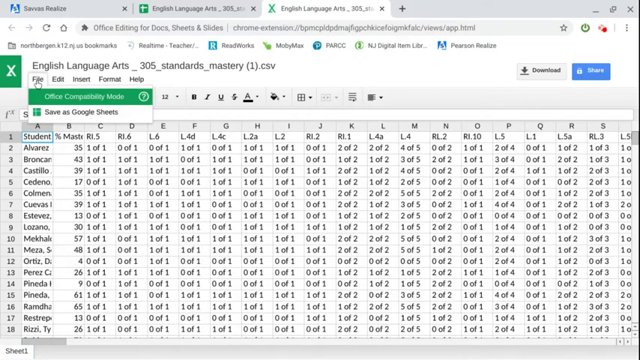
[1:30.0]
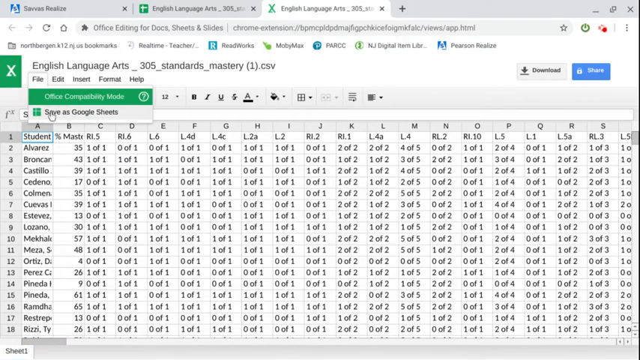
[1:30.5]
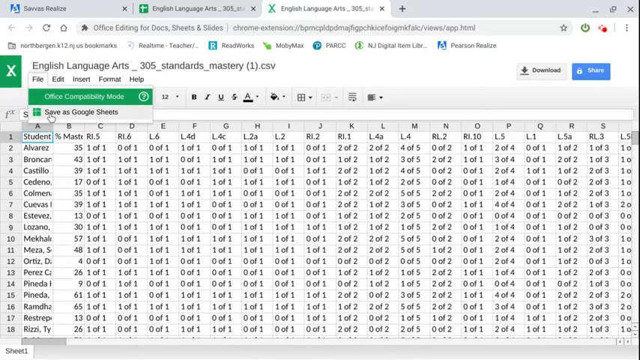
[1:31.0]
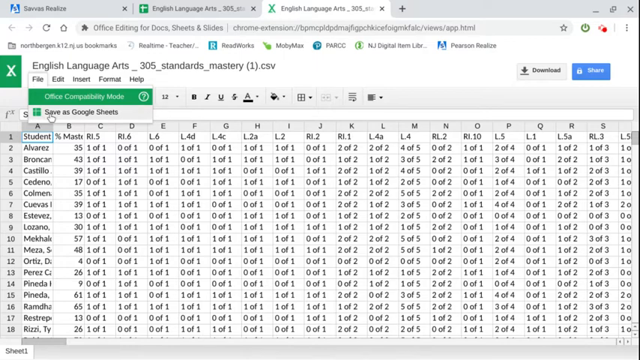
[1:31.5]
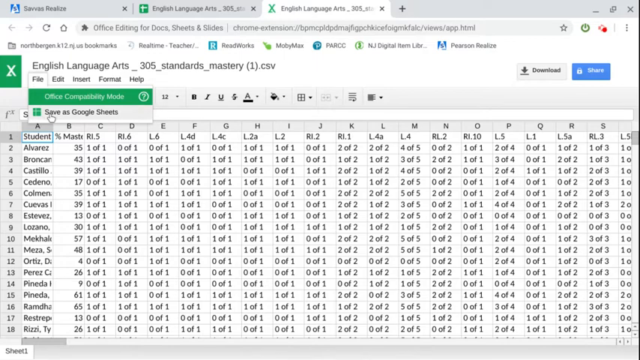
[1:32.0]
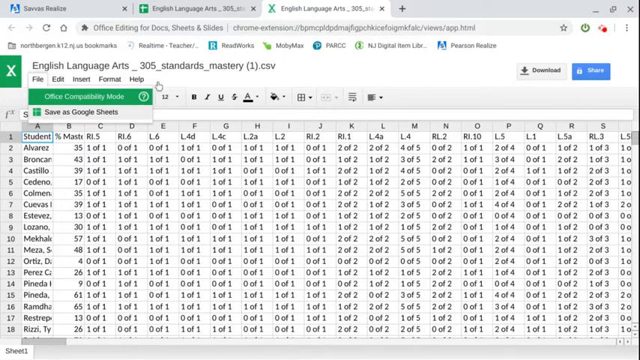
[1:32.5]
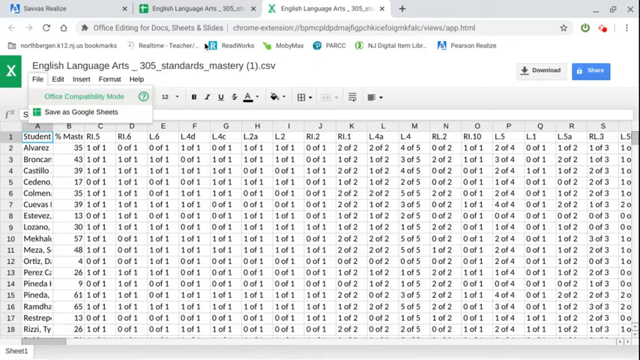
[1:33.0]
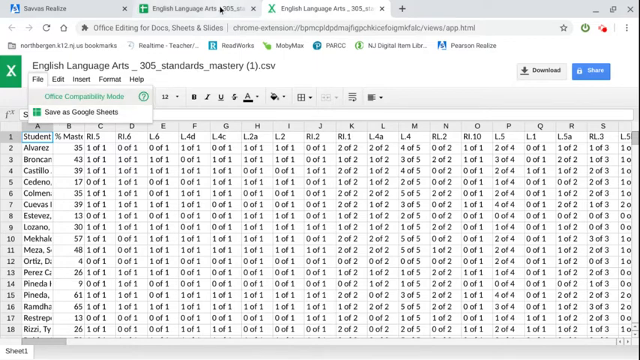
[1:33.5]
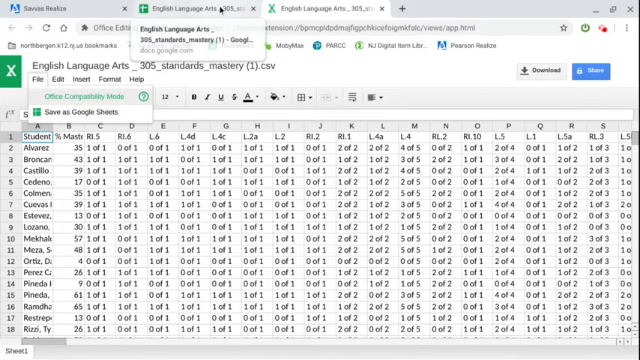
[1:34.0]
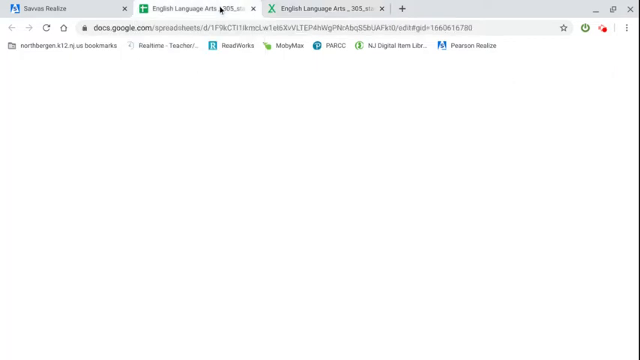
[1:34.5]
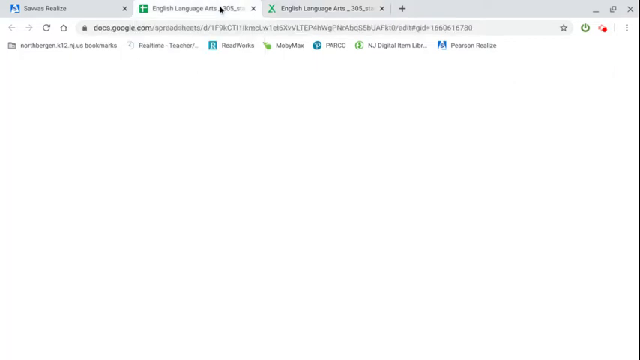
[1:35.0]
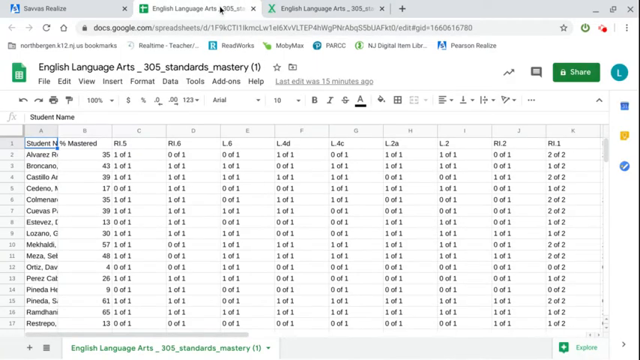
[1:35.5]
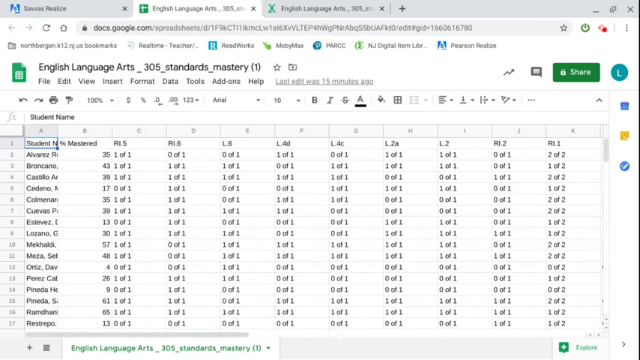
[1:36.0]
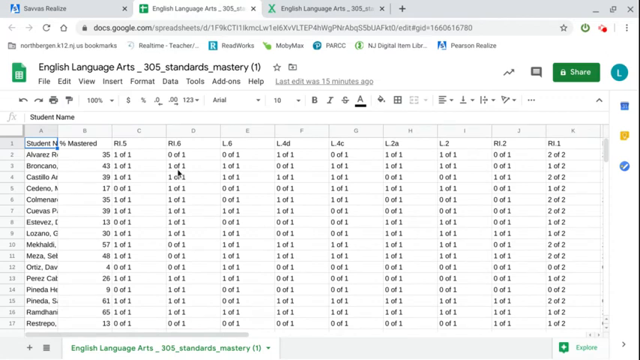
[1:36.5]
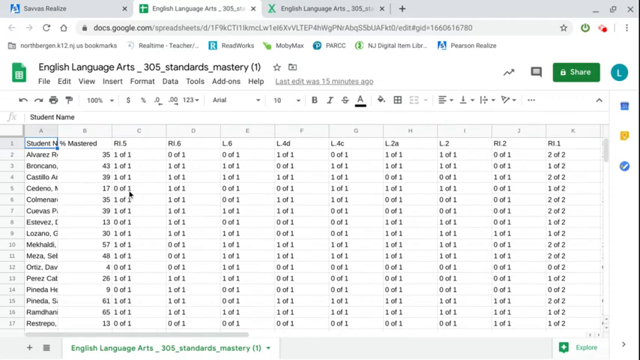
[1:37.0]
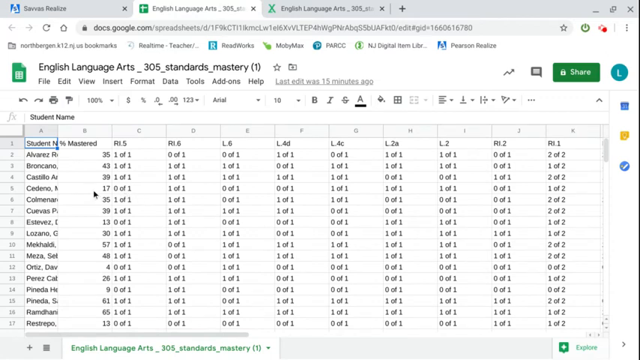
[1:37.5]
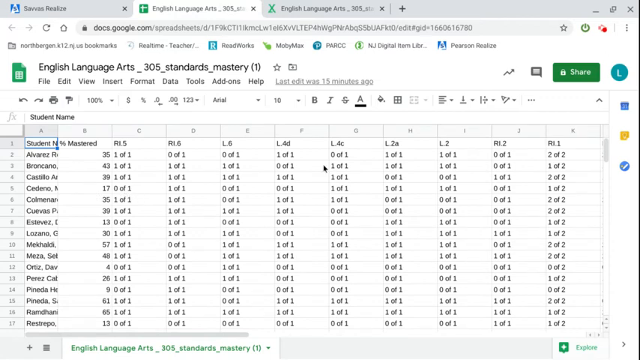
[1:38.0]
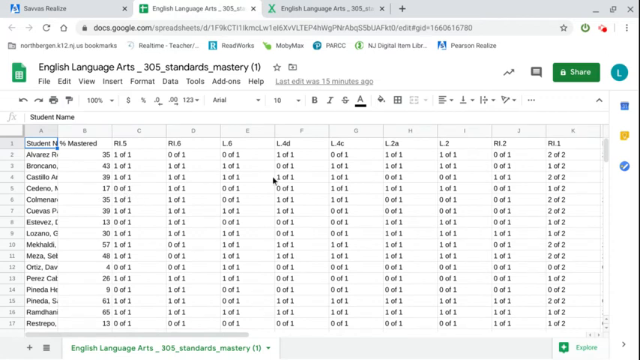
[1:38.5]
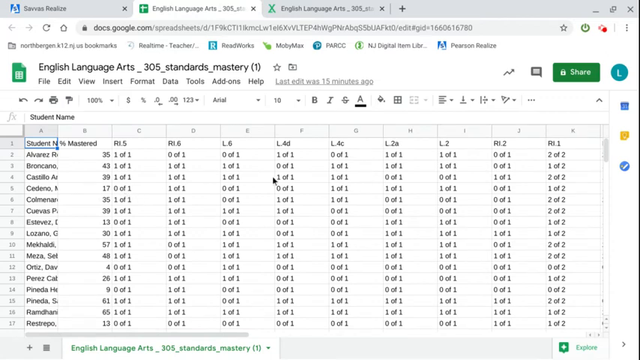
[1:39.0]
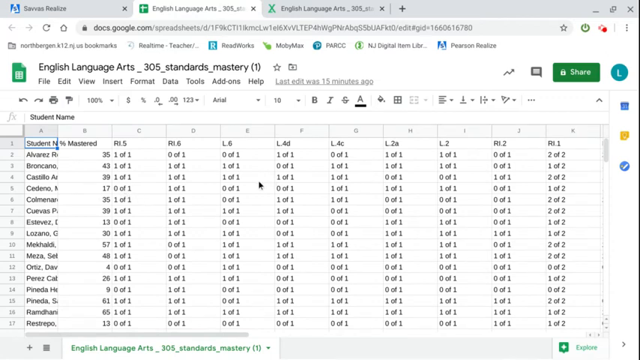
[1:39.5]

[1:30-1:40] The file is open in a spreadsheet, apparently a Google Sheet, showing Standards Mastery. The mouse moves over the data and appears to select some things. The view then switches to another open tab, possibly a second version of the file. No changes are made to the data.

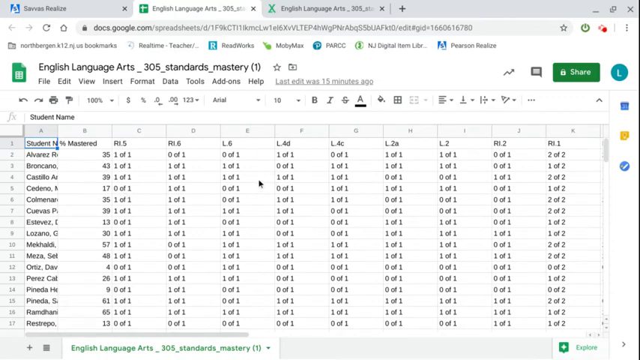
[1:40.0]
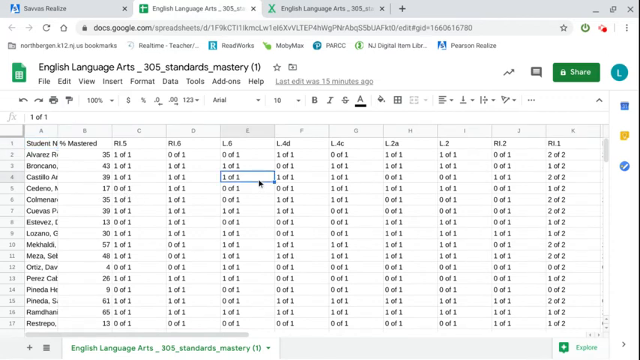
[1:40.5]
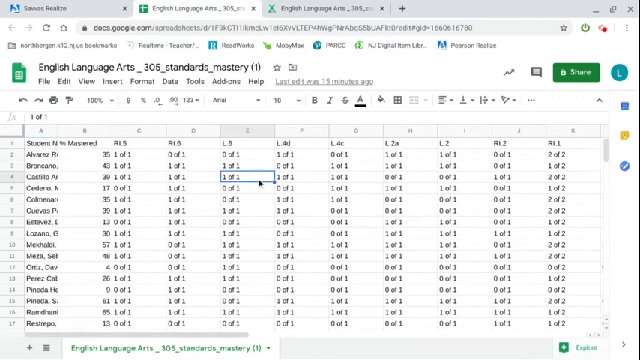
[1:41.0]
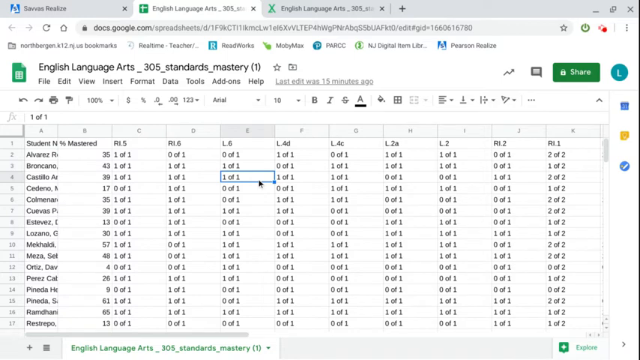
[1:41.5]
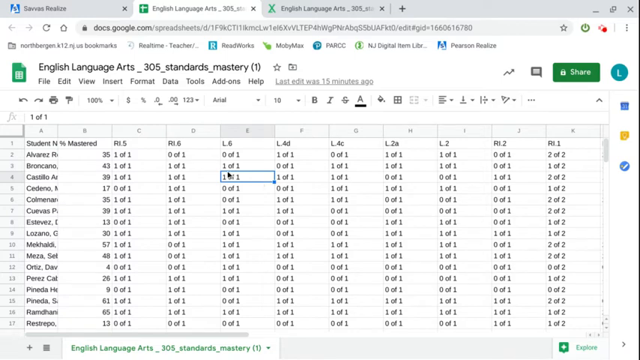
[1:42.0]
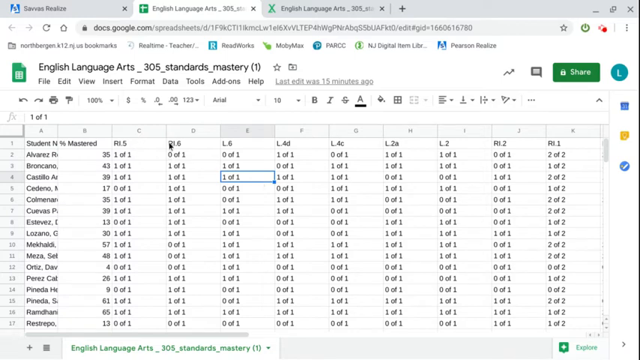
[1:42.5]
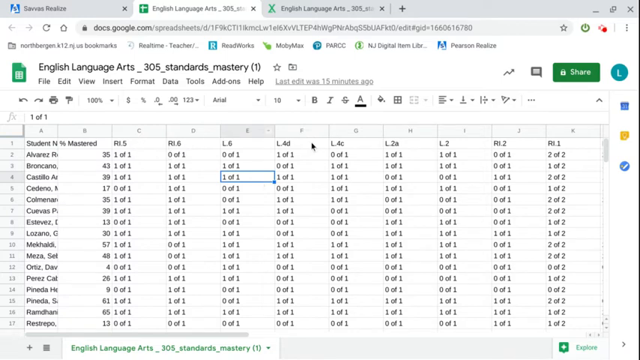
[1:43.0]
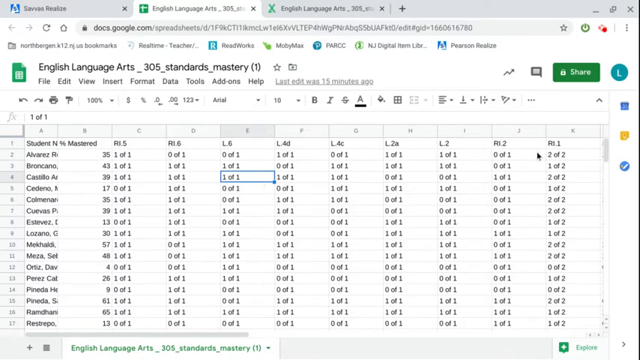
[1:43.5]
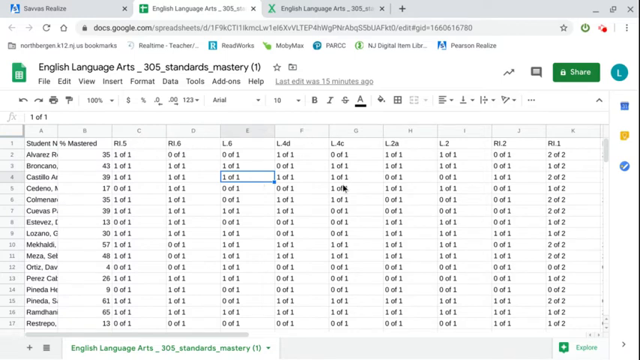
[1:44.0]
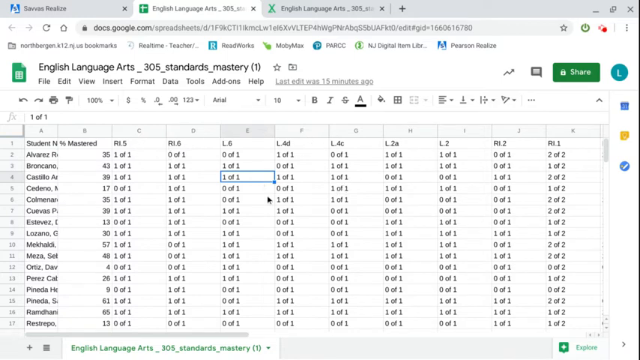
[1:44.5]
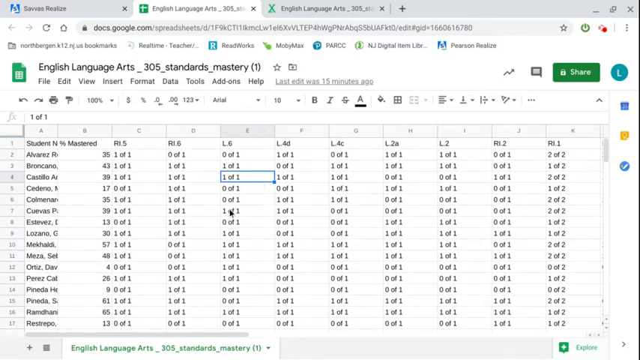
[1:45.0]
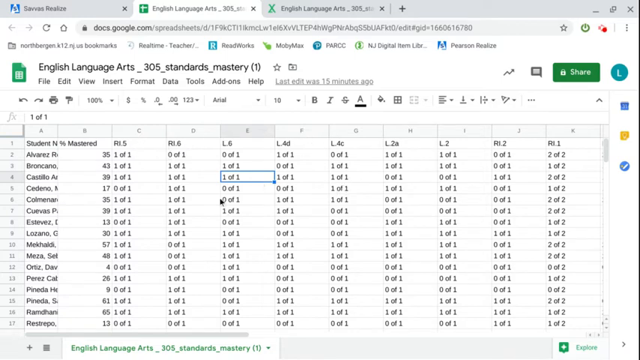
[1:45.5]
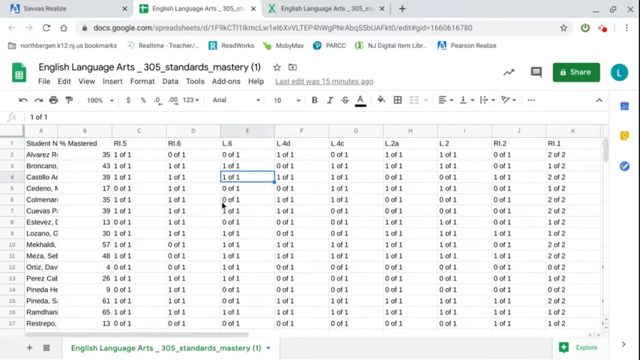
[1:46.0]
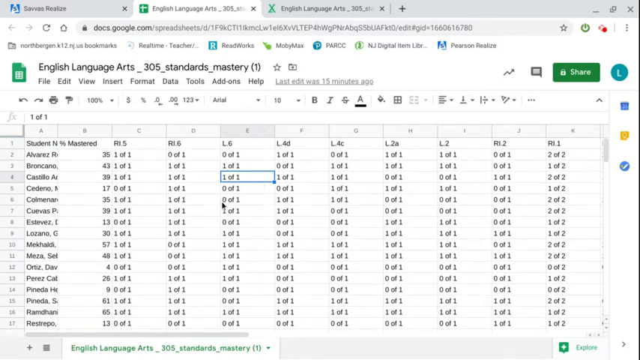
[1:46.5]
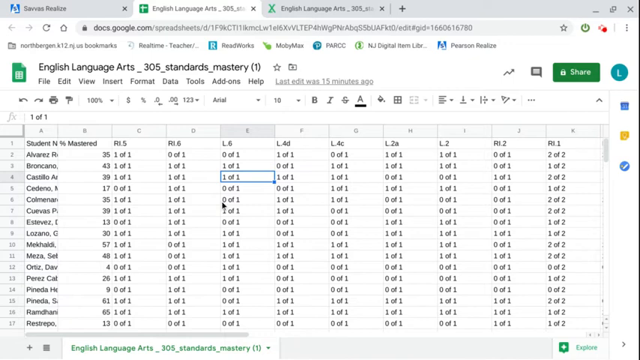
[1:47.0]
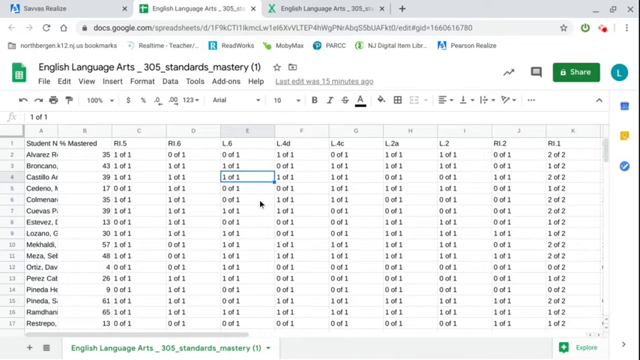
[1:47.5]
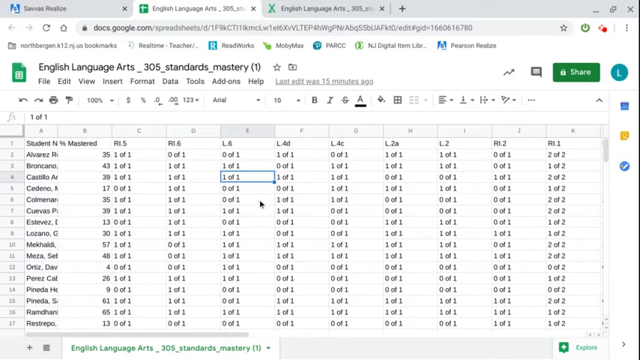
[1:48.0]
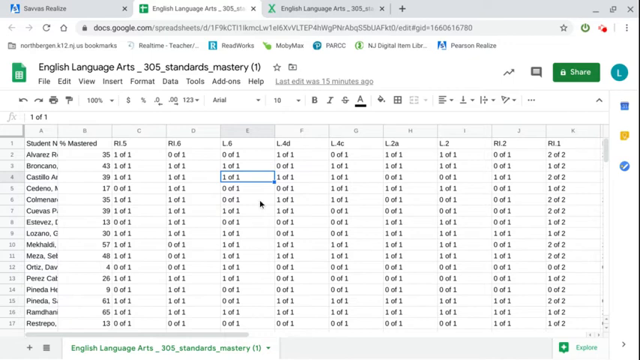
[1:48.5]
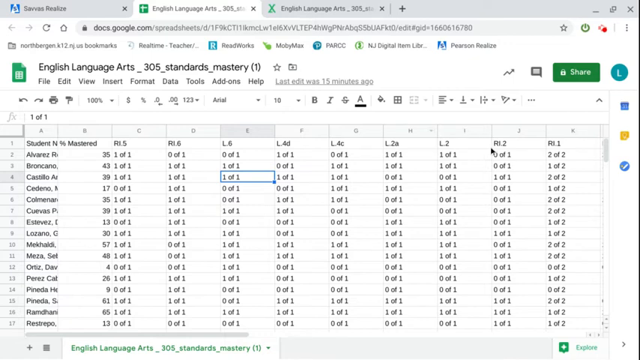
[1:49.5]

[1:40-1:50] The English Language Arts 305 Standards Mastery spreadsheet is open on its second tab. A cell is selected and the mouse moves around the page as the data is browsed; no changes are made to the data.